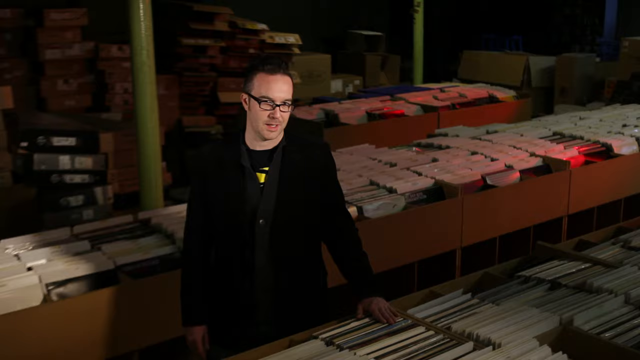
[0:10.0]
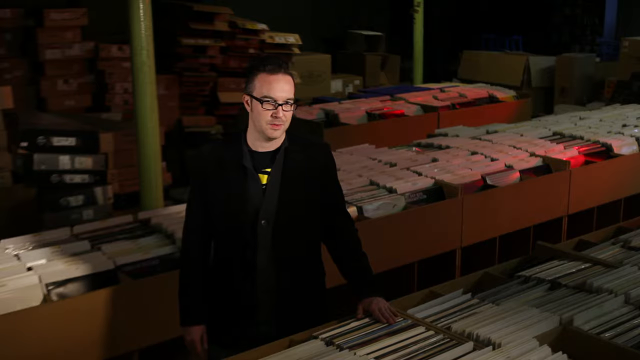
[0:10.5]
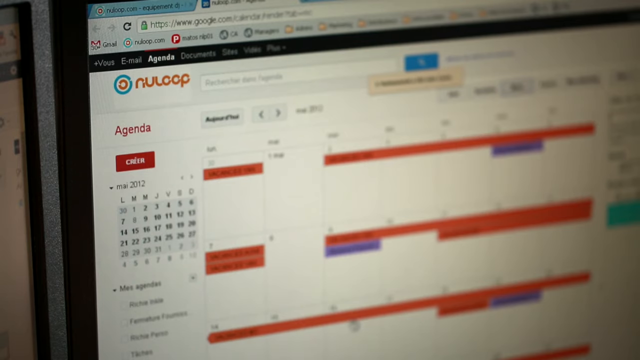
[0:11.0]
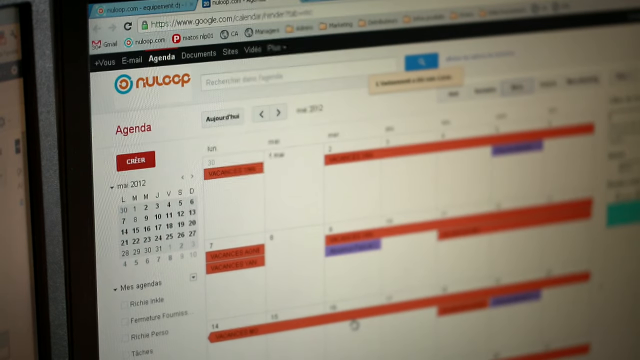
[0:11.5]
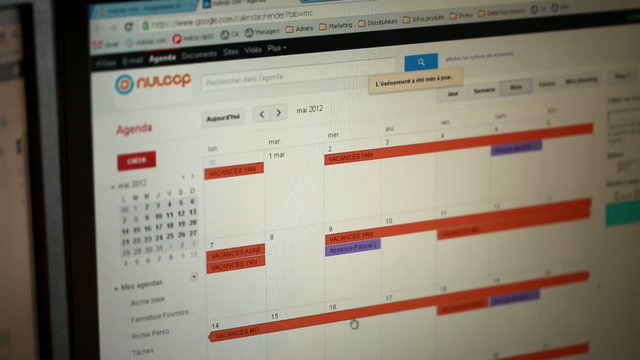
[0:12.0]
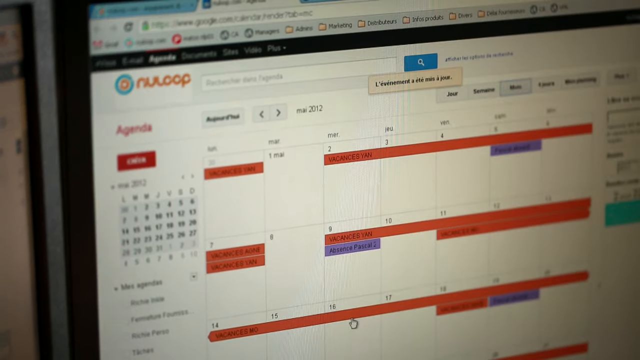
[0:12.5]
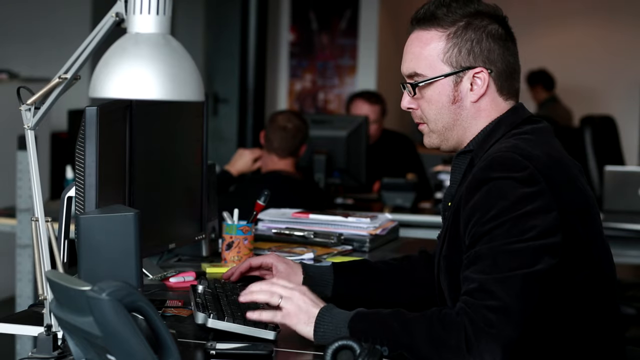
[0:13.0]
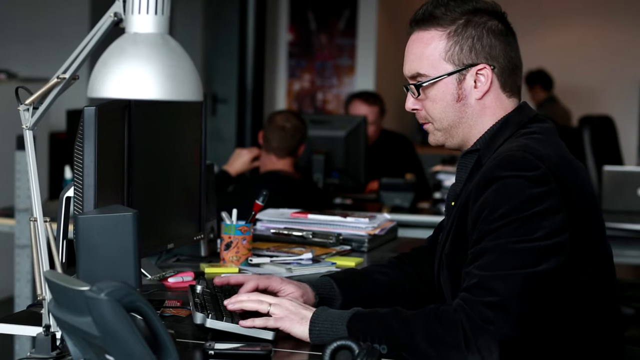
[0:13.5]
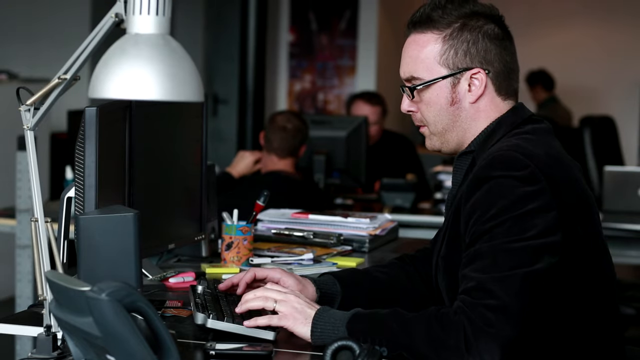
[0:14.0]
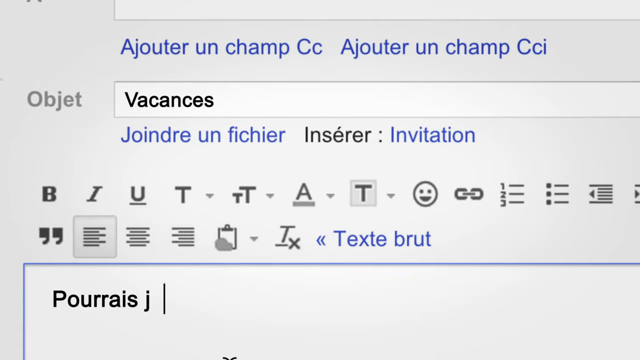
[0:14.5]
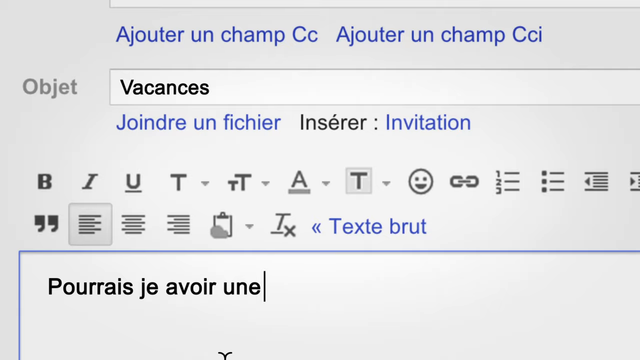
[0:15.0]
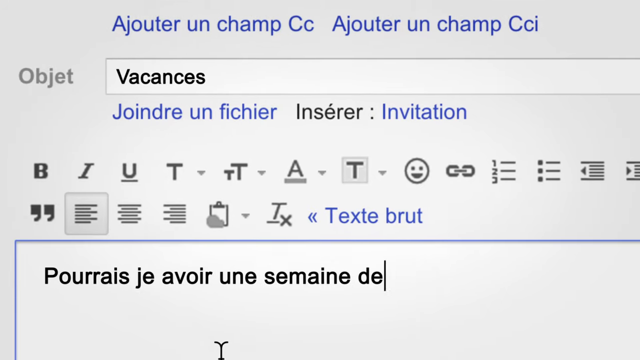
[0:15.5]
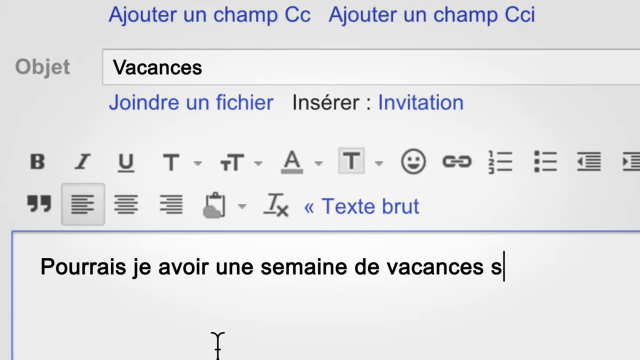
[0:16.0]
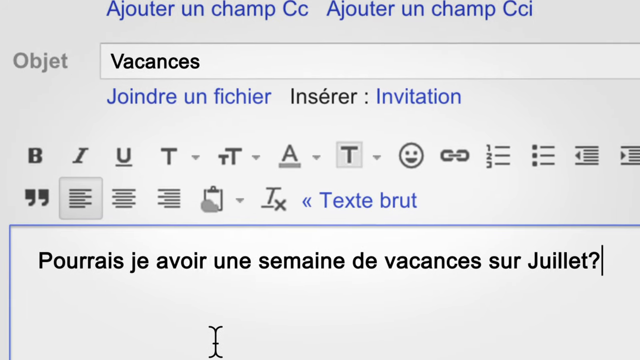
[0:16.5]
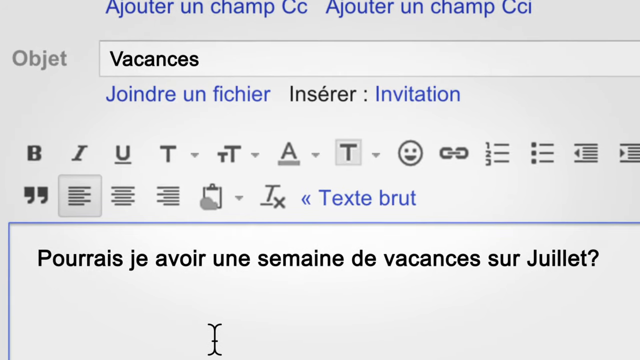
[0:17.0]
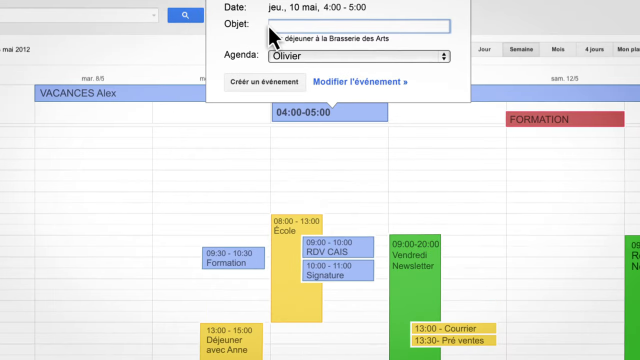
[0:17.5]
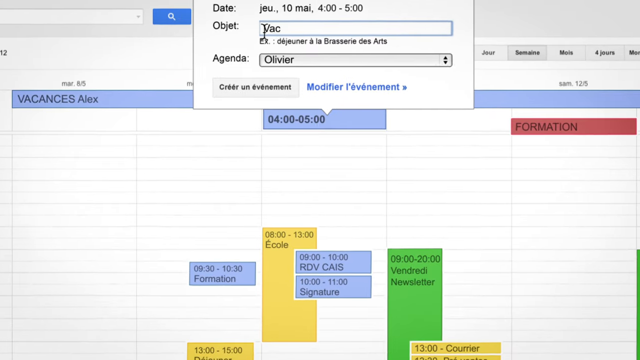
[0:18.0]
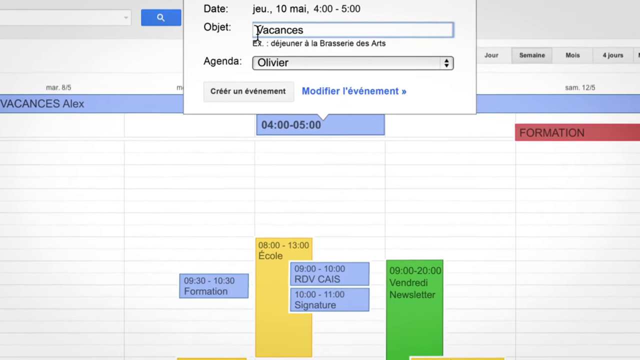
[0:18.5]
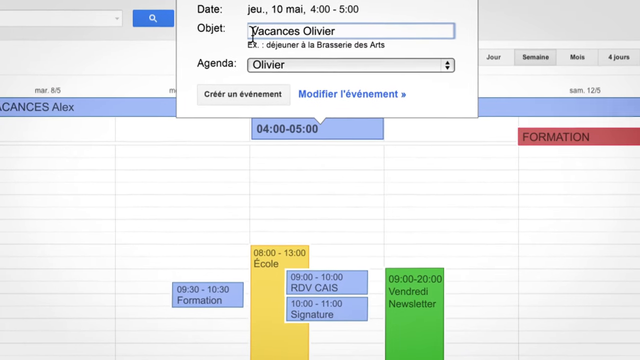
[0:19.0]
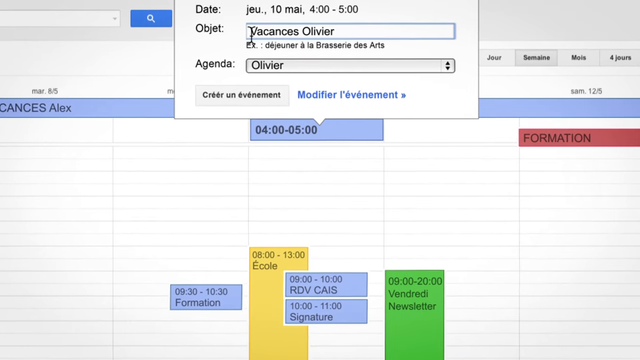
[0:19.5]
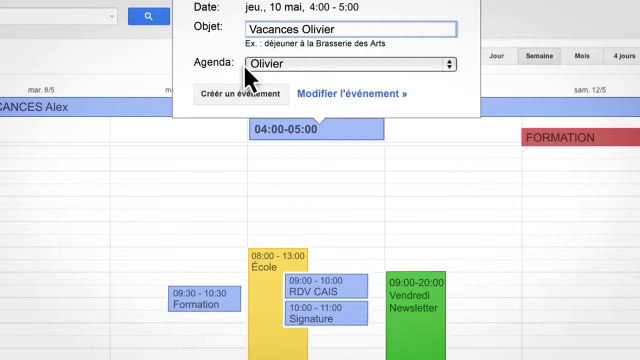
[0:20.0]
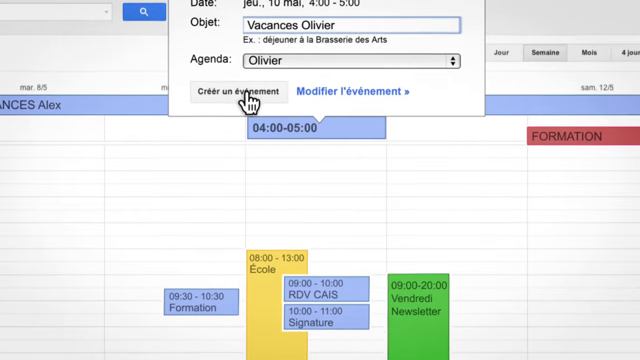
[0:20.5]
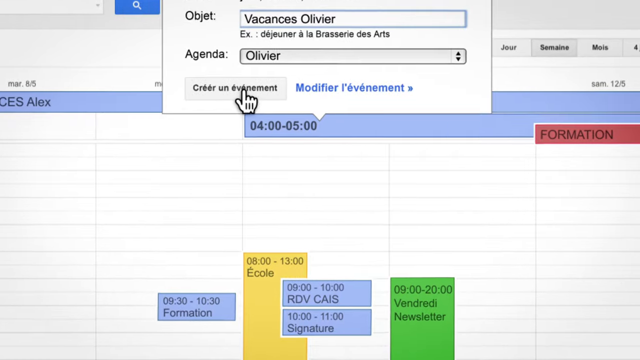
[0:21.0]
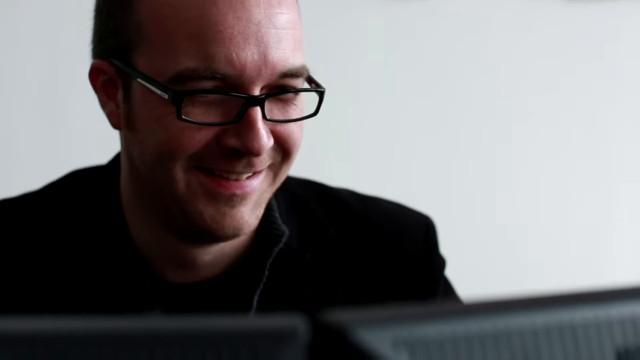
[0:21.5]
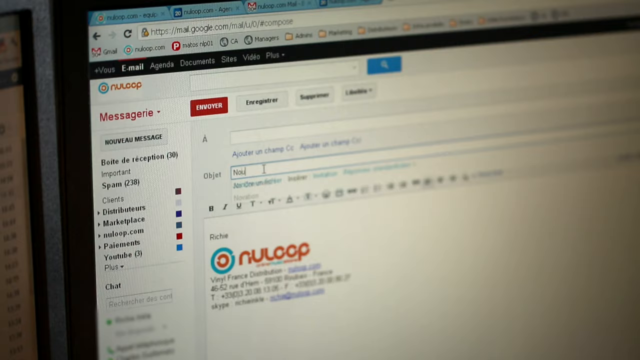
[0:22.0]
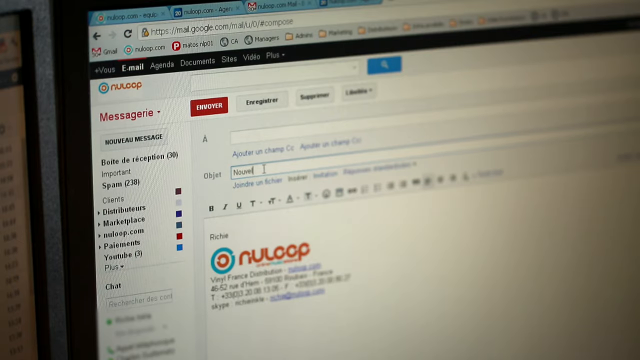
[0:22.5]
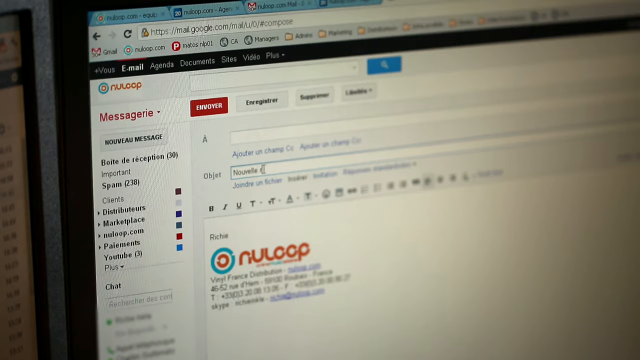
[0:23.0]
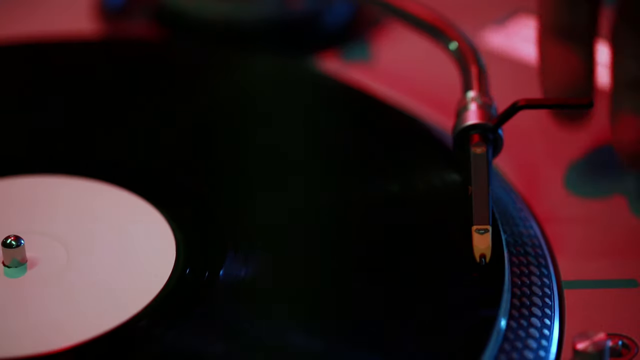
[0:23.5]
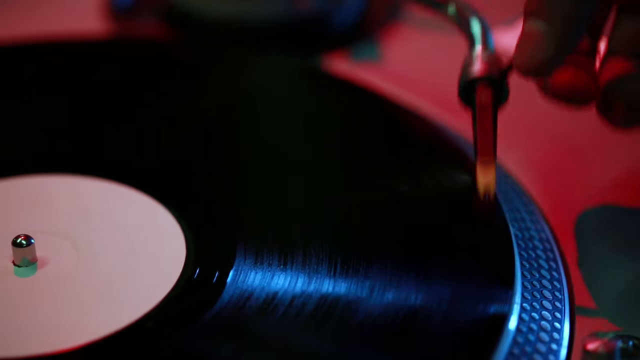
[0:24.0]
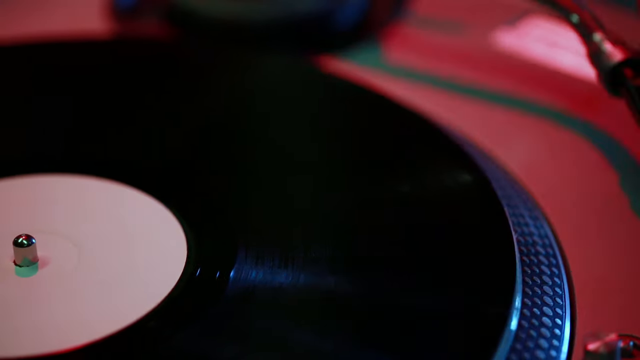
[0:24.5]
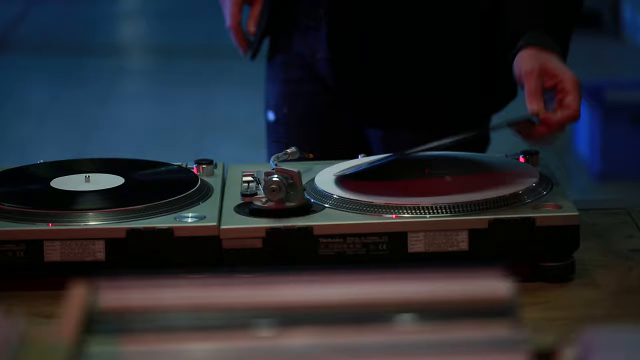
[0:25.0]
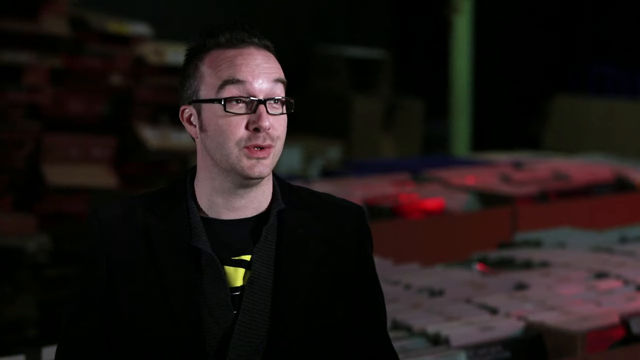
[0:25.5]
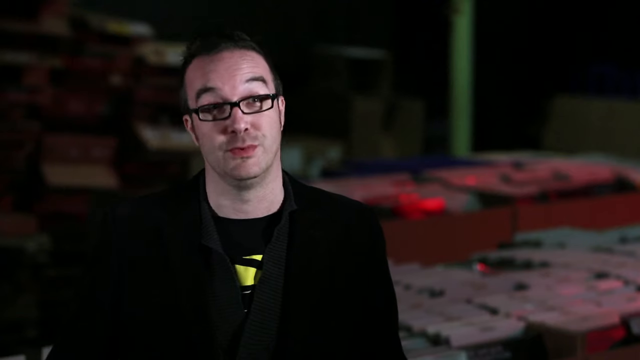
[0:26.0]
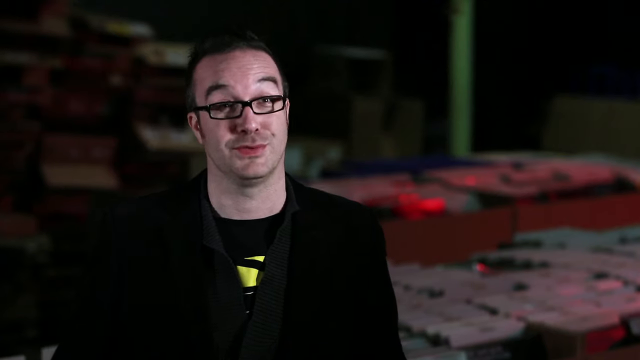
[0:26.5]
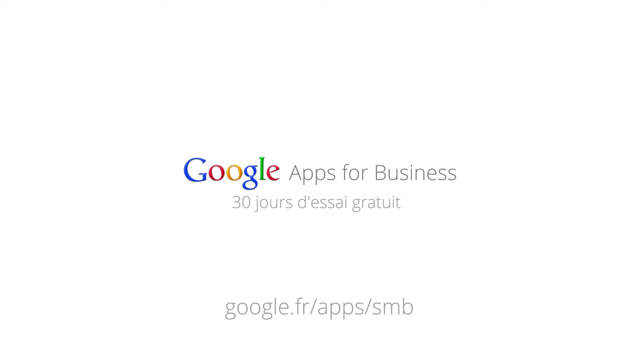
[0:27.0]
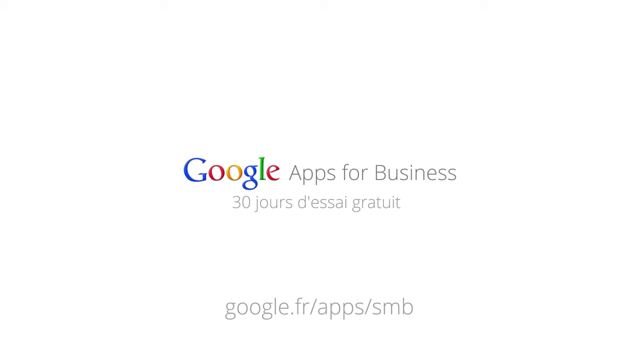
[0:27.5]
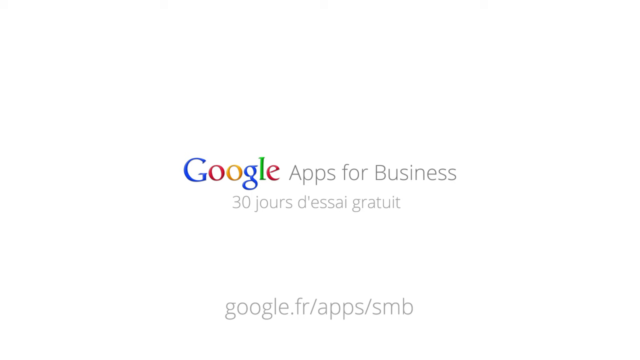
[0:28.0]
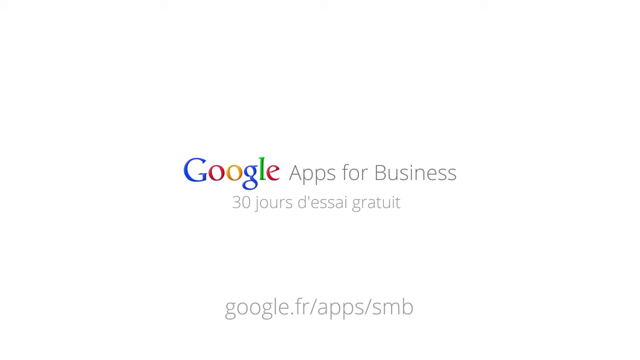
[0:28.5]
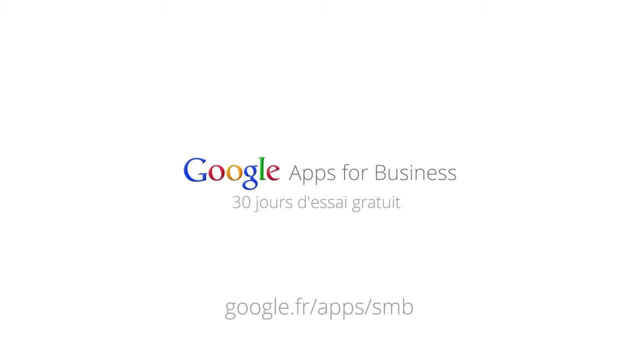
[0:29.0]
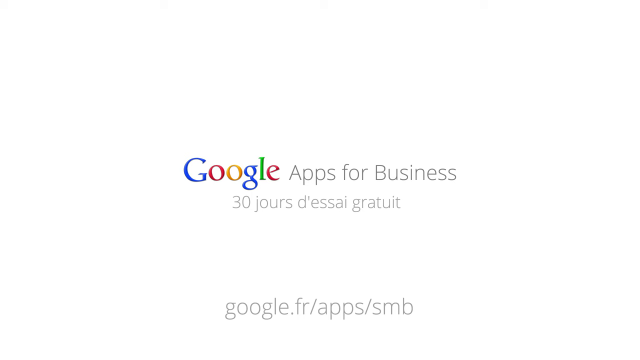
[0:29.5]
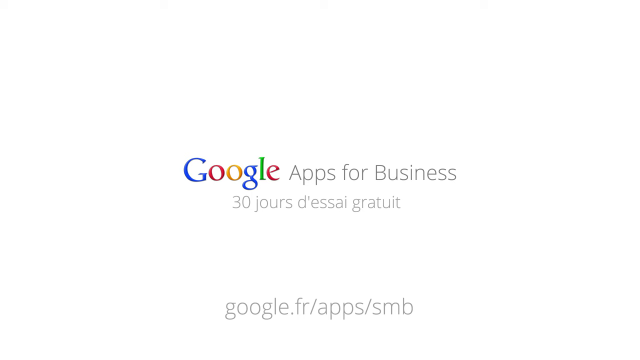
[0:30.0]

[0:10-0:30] The man being interviewed, possibly the NuLoop owner, wears a black jacket with a little yellow showing through, glasses, and has very short hair. Many albums are in the background, and the room is dark, without much lighting. The NuLoop website appears on a computer screen in orange and white, showing a calendar agenda that looks like a day planner. The man who was being interviewed is then shown at a computer typing; other people are at computers on his right side, and there is a little white lamp. They are typing in a different language that cannot be understood. Footage follows of somebody playing a record, along with "Google Apps for Business". The room where he is interviewed is very dark, and even where he types at the computer the lighting is very dark.